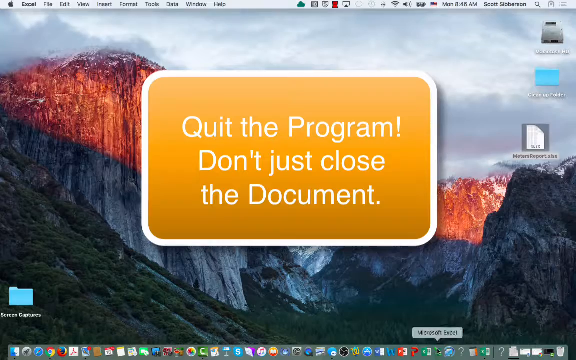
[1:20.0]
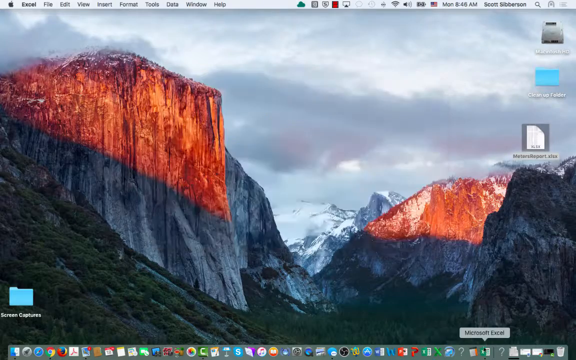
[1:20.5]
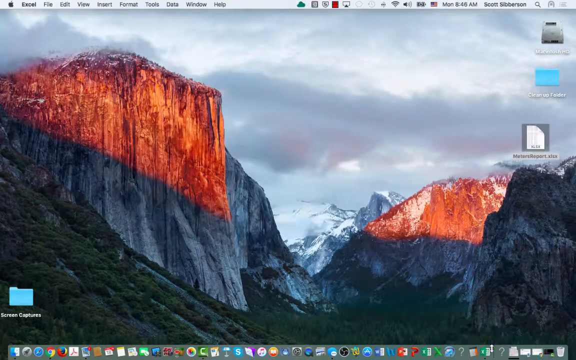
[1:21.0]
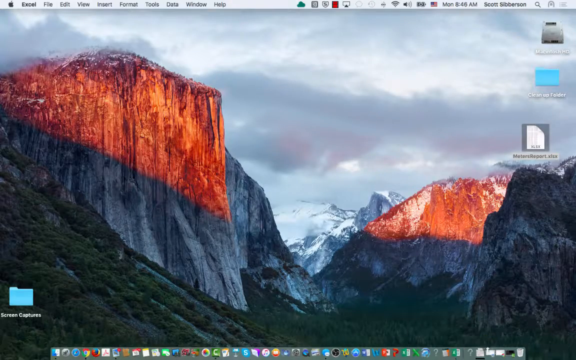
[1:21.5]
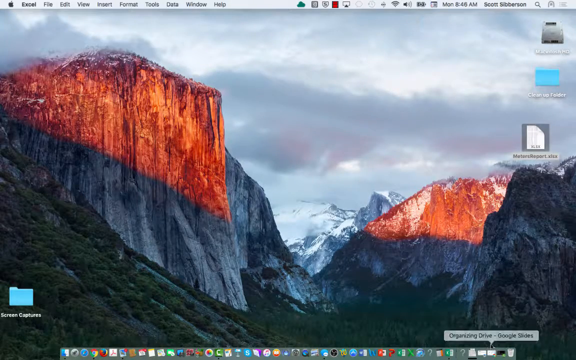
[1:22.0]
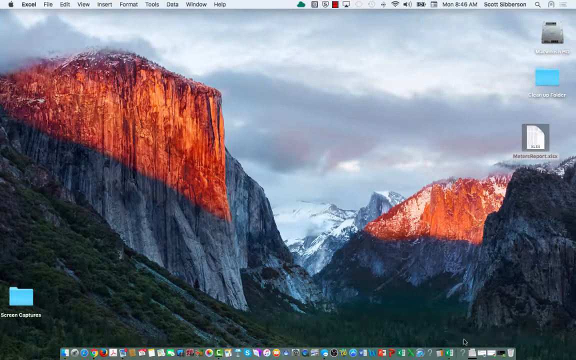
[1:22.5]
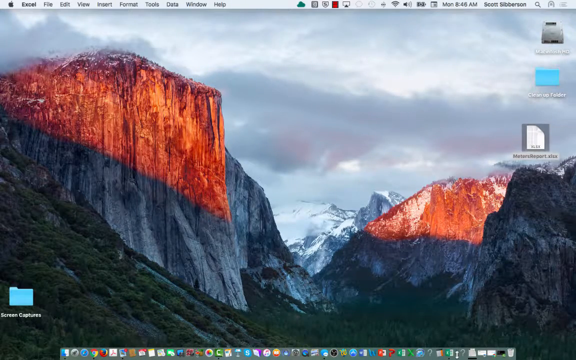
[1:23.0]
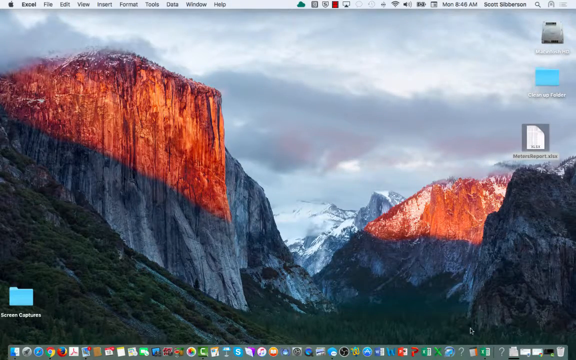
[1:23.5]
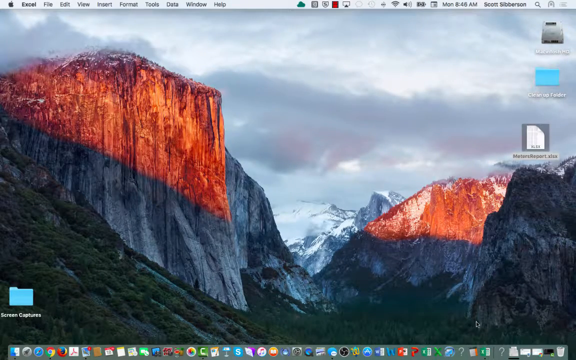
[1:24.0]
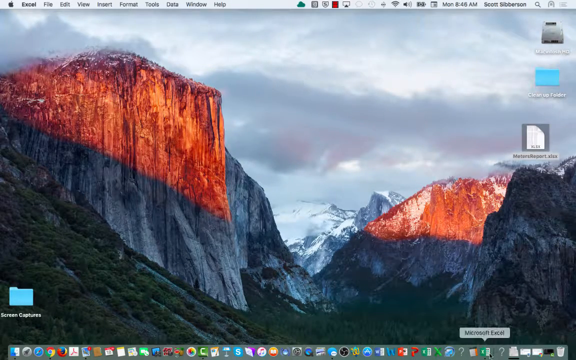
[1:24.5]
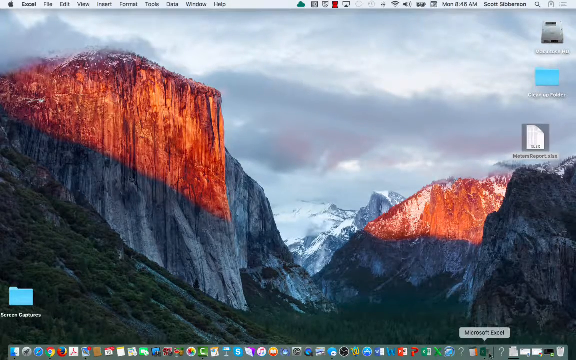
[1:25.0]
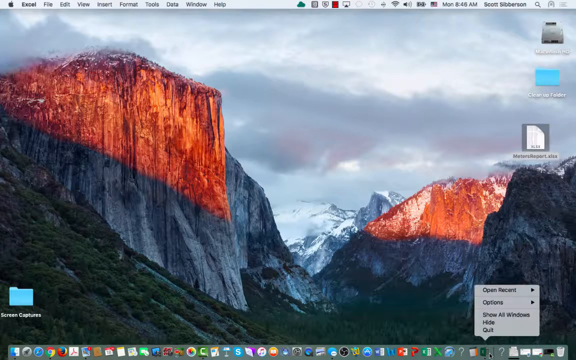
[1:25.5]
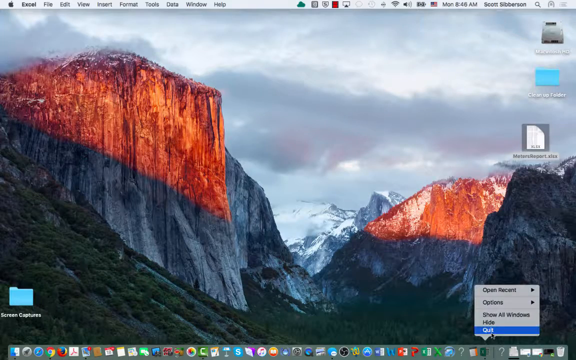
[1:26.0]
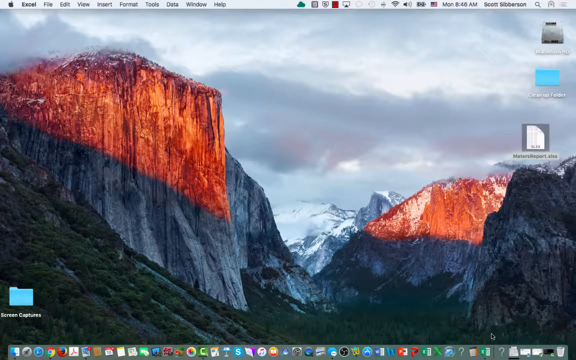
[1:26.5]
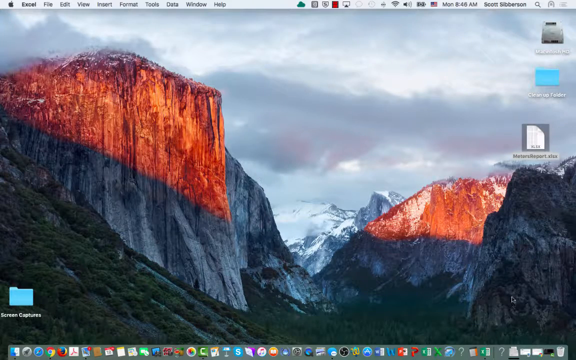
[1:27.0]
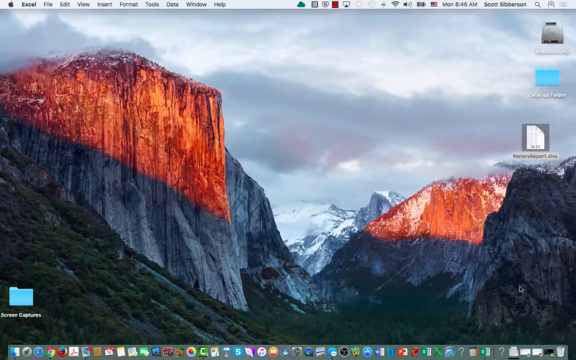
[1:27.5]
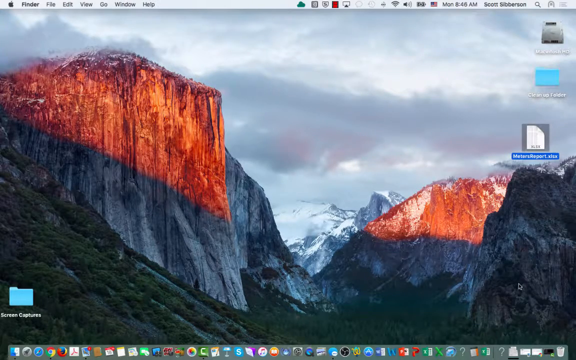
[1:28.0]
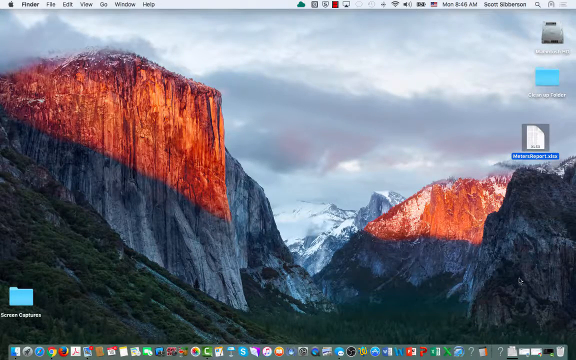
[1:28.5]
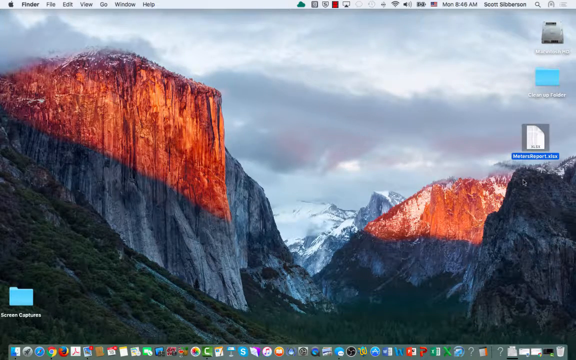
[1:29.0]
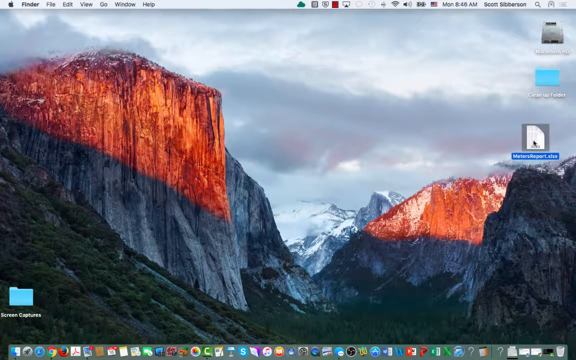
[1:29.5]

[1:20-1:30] The person moves down to a set of options at the bottom of the screen that cannot be made out and presses a button, bringing up a small pop-up reading "open recent options, show all windows, hide, and quit". They click "quit", then go back up to the meters report Excel spreadsheet. There appear to be some icons and programs at the very bottom of the screen, but they are cut off by the video's timeline; one appears to be a Microsoft Excel program. The person apparently demonstrates quitting the program by clicking the app icon at the bottom rather than just minimizing it or going into the document again.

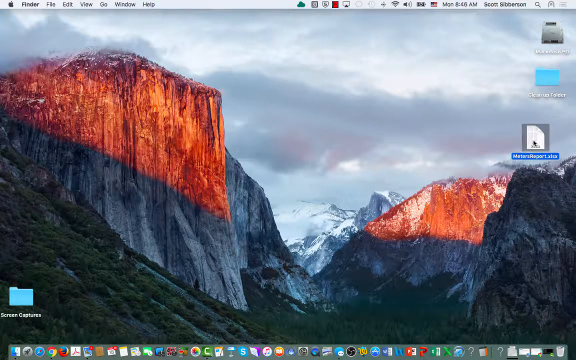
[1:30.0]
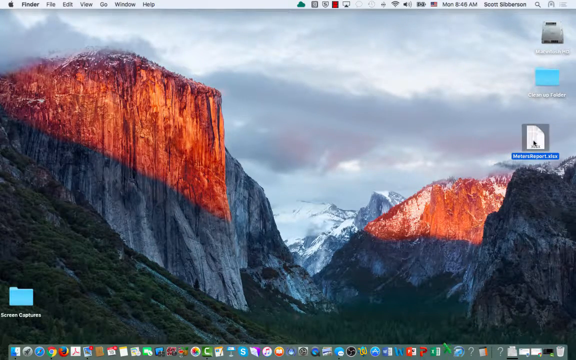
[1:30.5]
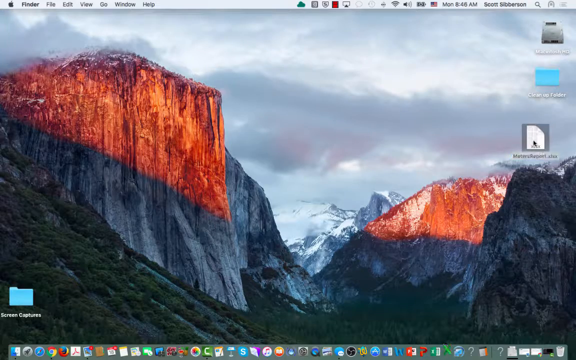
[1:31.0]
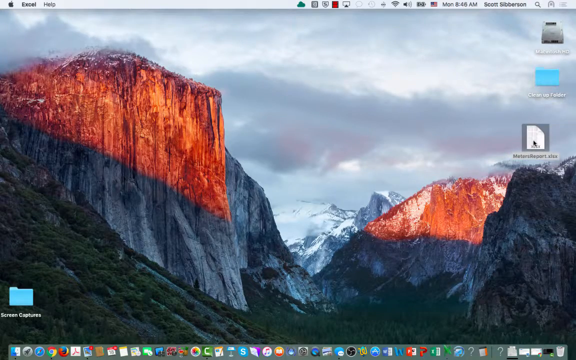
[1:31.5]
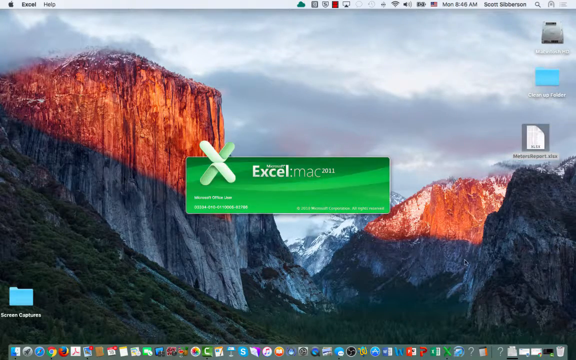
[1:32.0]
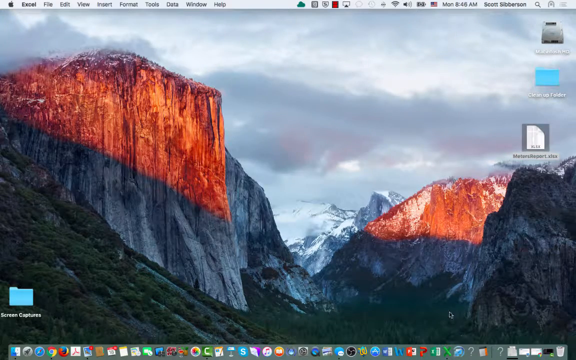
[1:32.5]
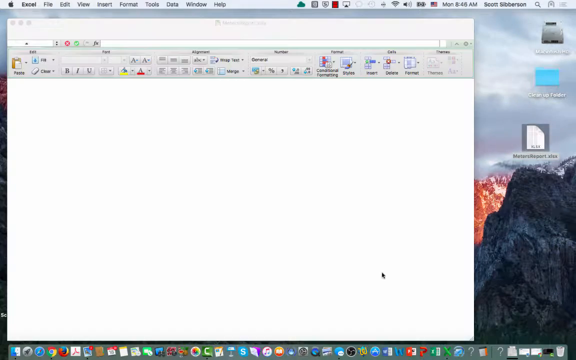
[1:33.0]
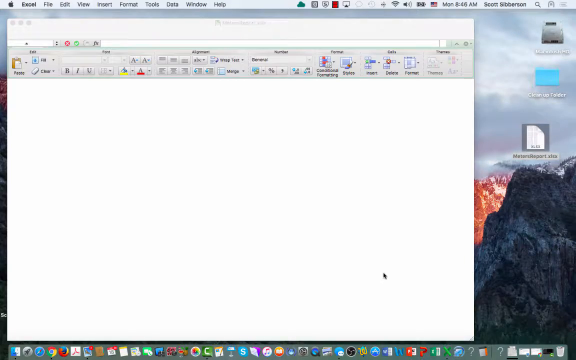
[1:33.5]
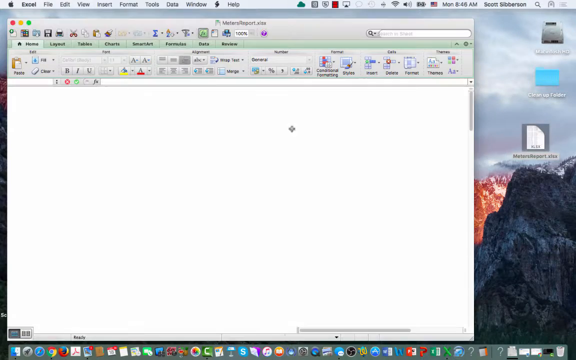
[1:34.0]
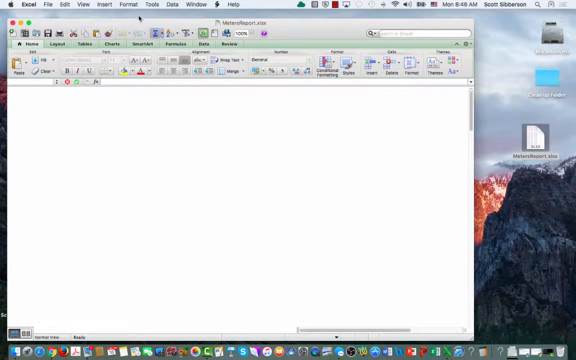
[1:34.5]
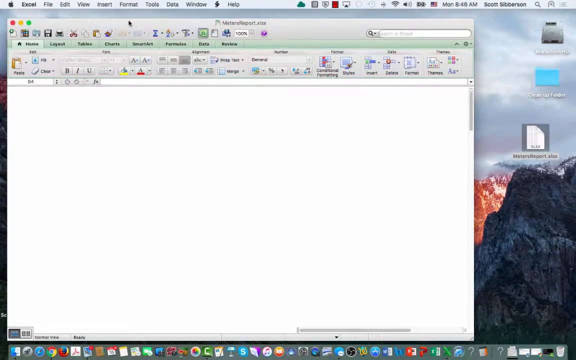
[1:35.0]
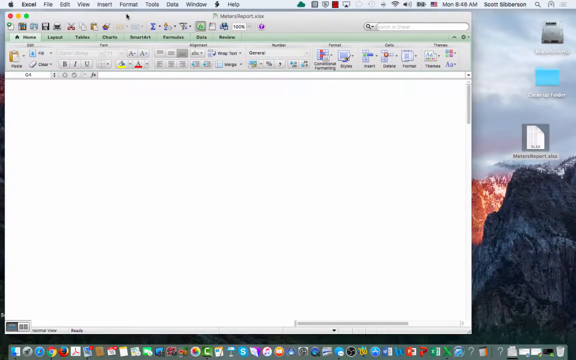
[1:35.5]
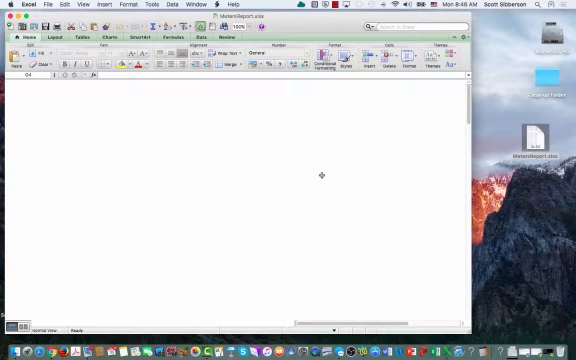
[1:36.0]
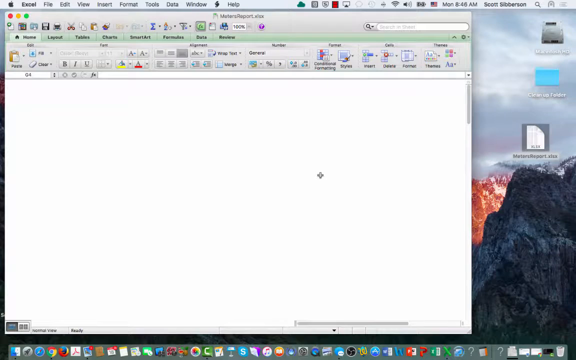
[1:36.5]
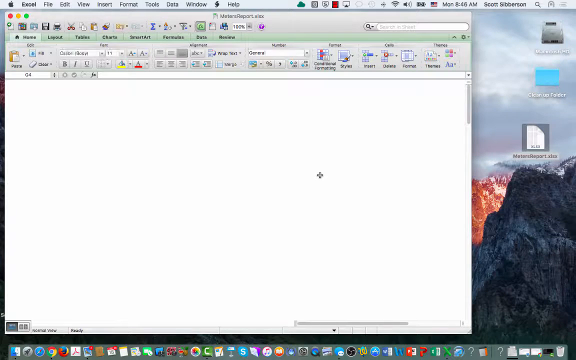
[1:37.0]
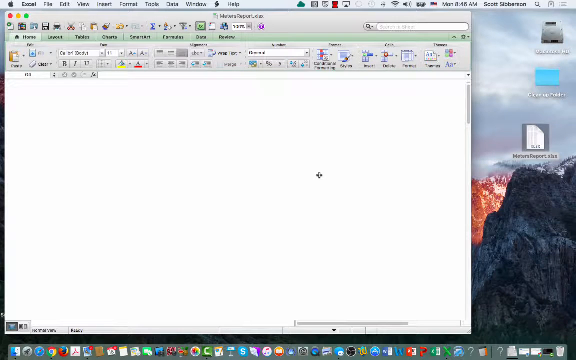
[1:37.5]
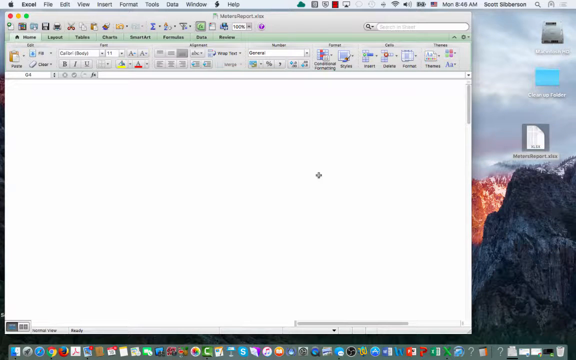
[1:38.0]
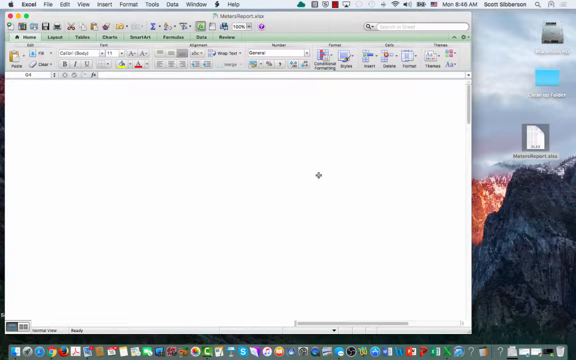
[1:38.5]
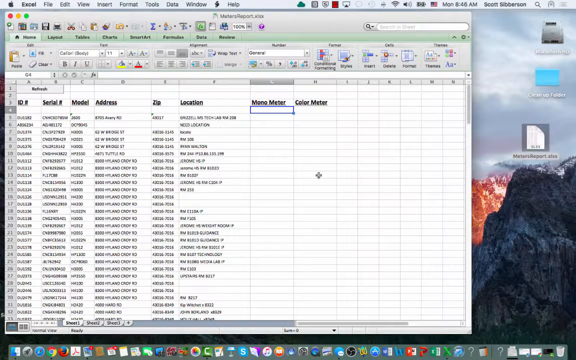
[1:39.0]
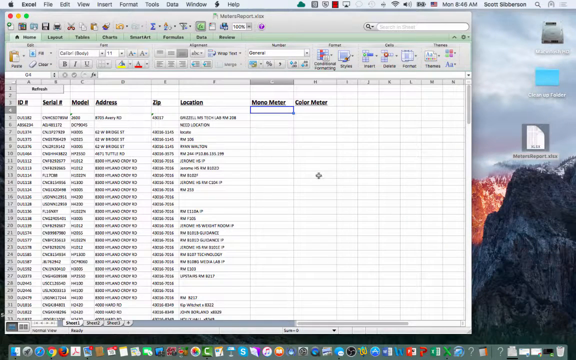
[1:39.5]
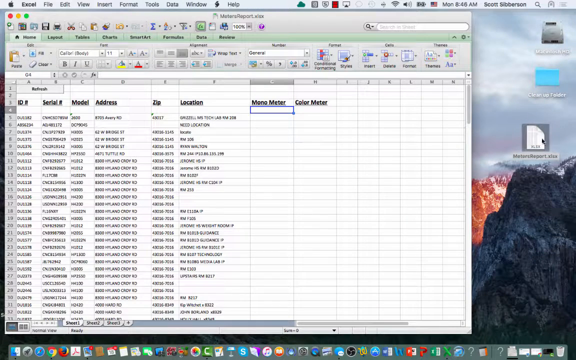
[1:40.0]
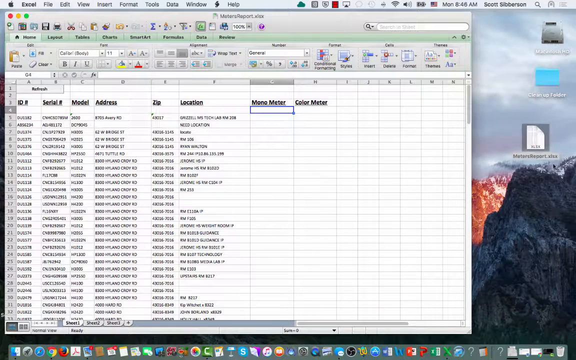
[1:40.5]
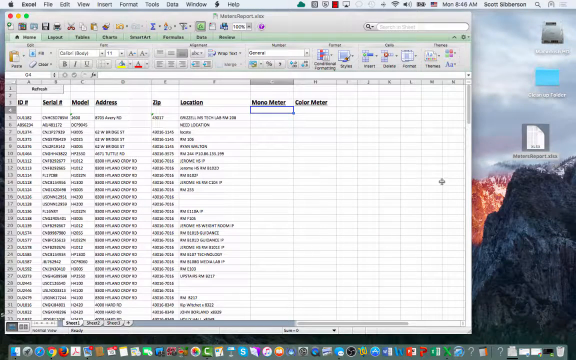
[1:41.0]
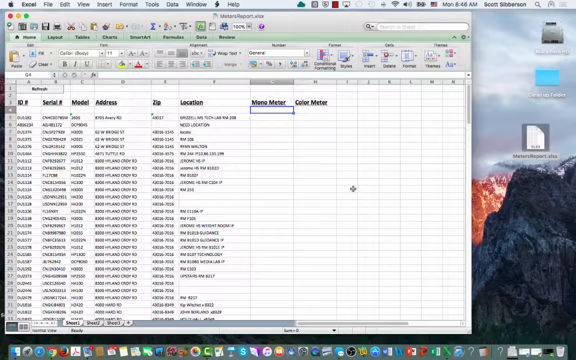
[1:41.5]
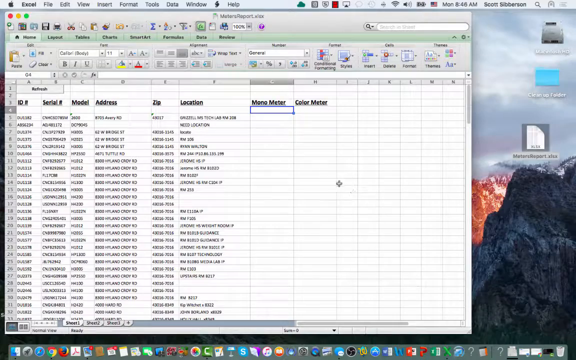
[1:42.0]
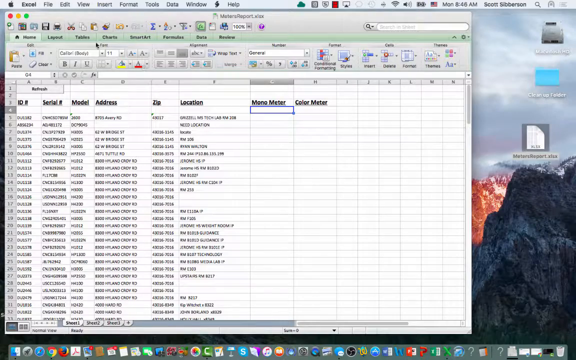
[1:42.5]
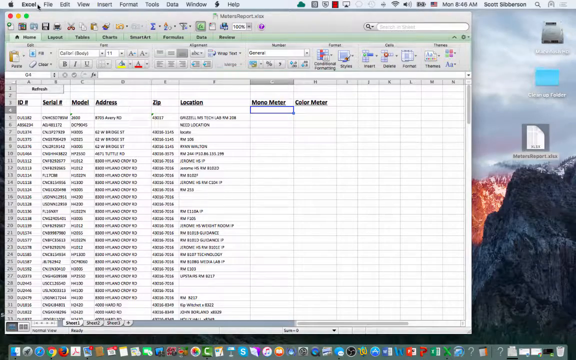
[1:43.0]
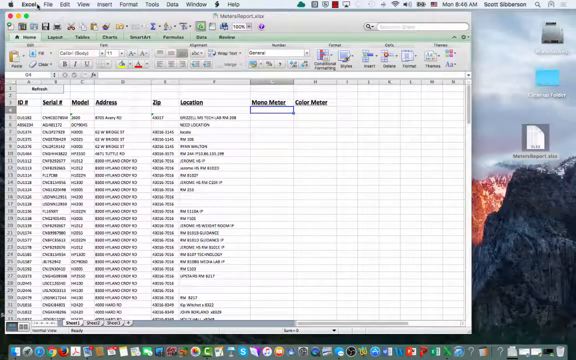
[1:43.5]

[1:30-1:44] The Microsoft Excel starting logo appears, followed by the meters report spreadsheet, which is initially blank; after a few seconds all the information loads, and then the spreadsheet is minimized. In the ID column, most entries start with "DU", such as 112 and 113. The serial numbers vary greatly, and the model numbers also vary but mostly start with the letter H. Most of the visible addresses are on Hyland Croy Road. The Location column appears to contain room numbers or directions to a location. The Monometer and Color Meter columns are both blank, at least in the visible rows 1 to 33. The text is Calibri at font size 11.